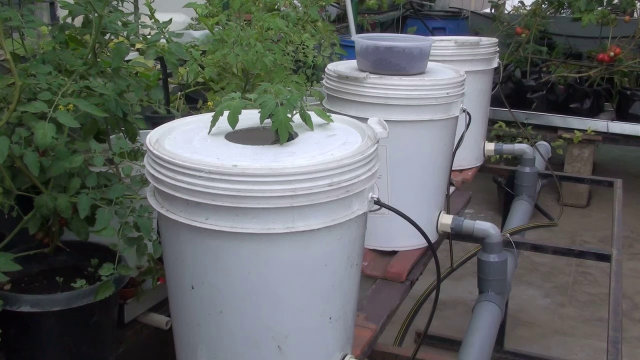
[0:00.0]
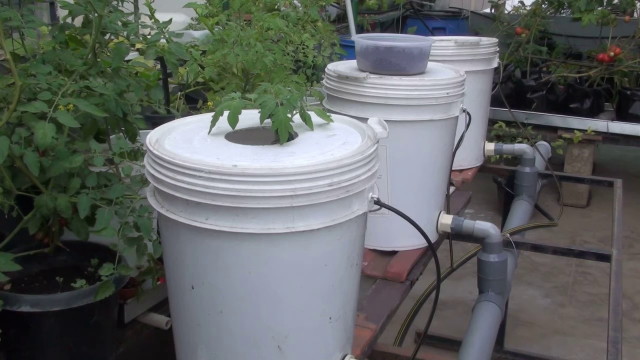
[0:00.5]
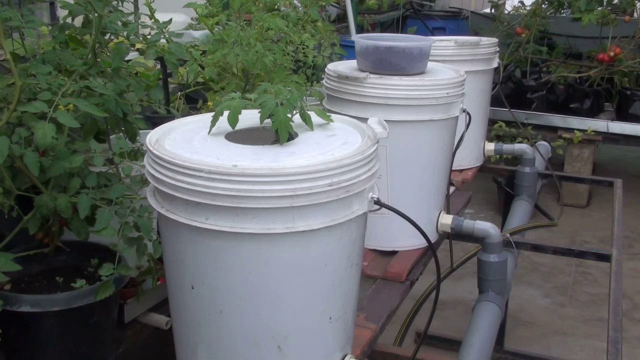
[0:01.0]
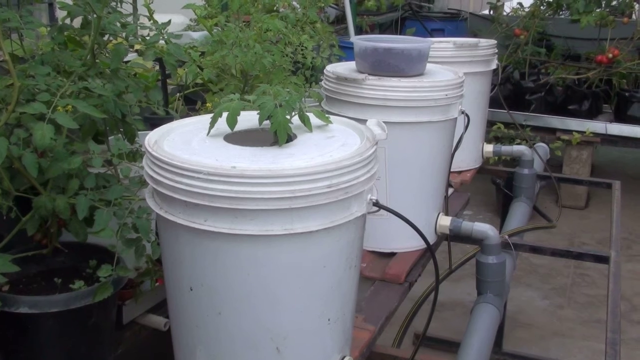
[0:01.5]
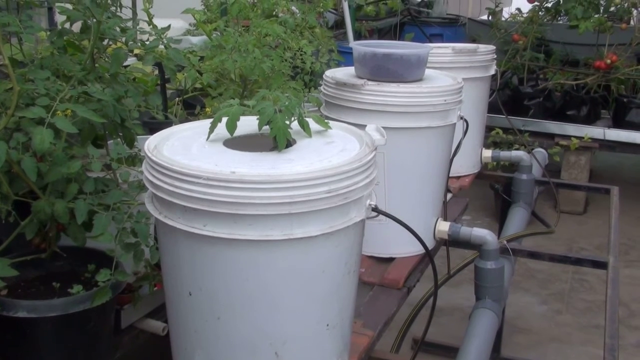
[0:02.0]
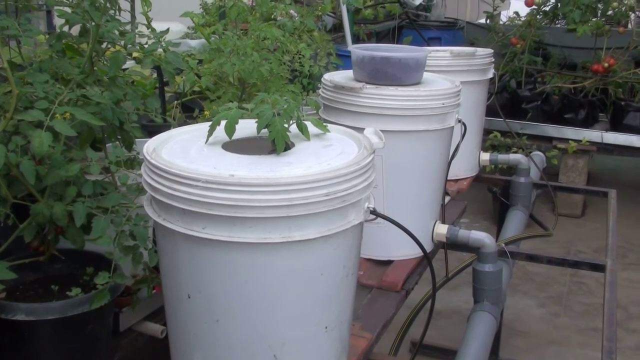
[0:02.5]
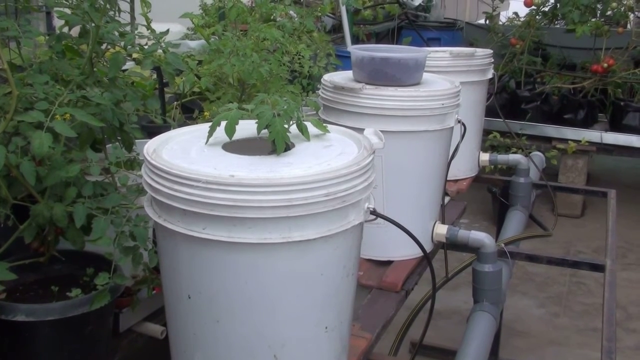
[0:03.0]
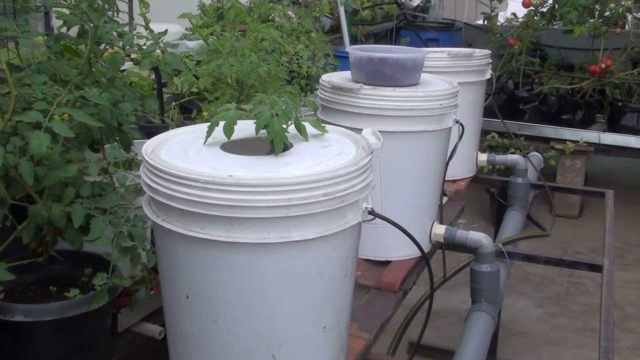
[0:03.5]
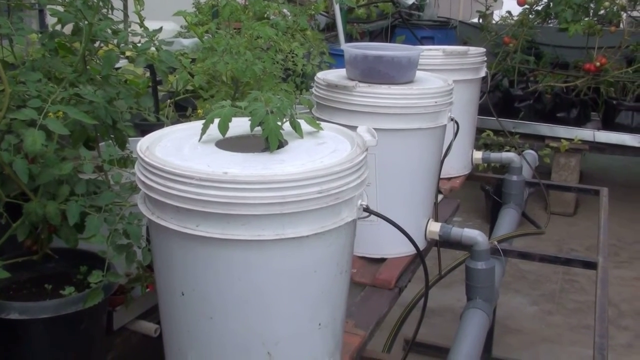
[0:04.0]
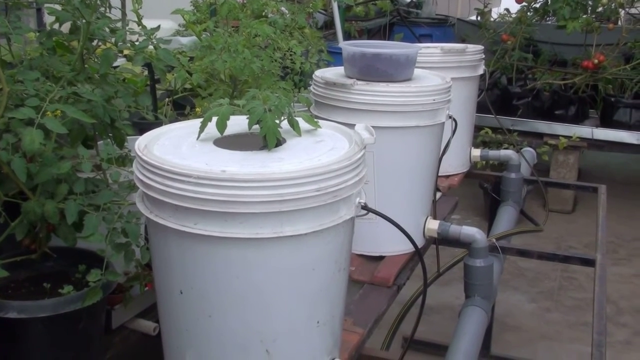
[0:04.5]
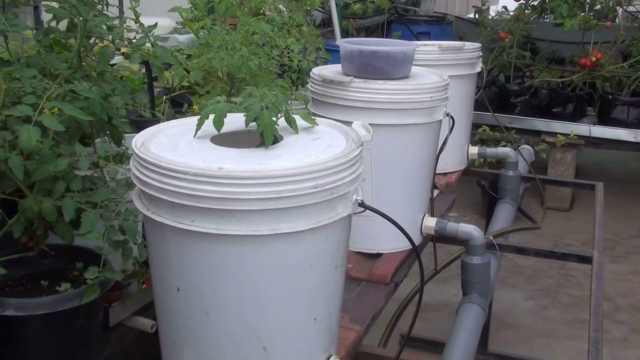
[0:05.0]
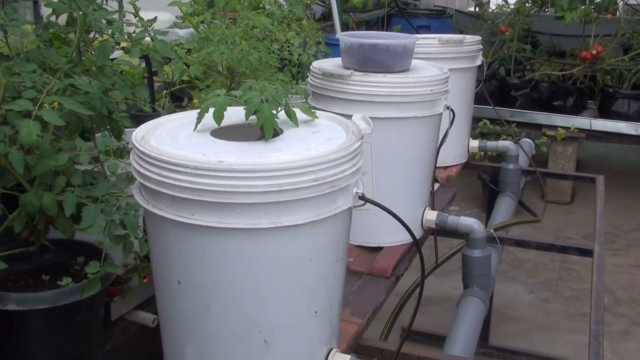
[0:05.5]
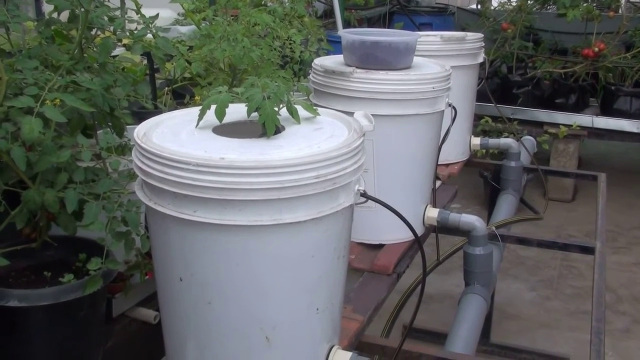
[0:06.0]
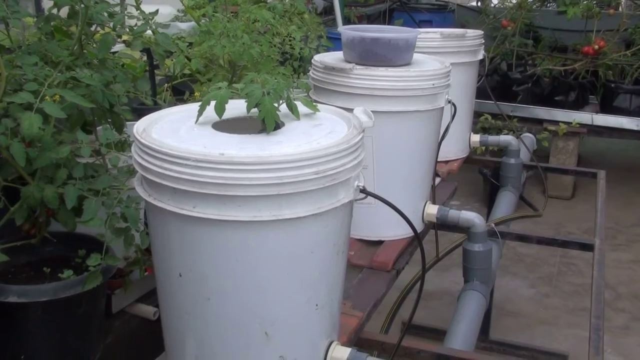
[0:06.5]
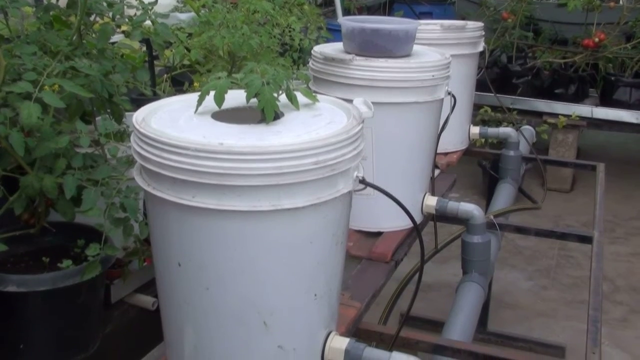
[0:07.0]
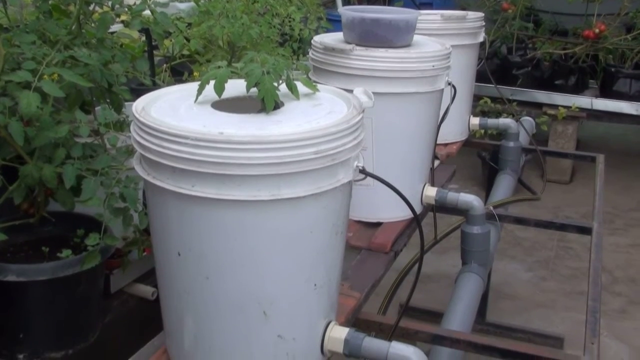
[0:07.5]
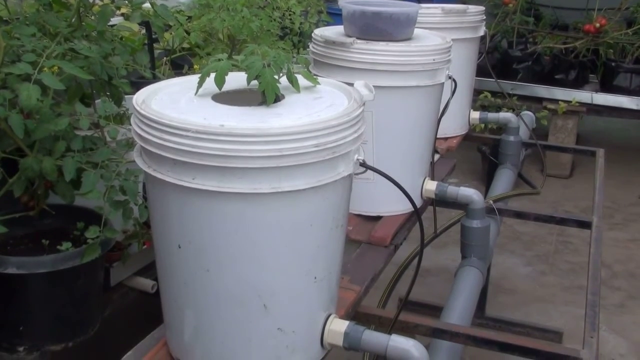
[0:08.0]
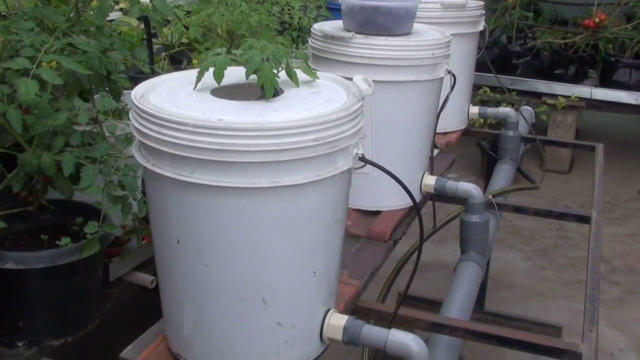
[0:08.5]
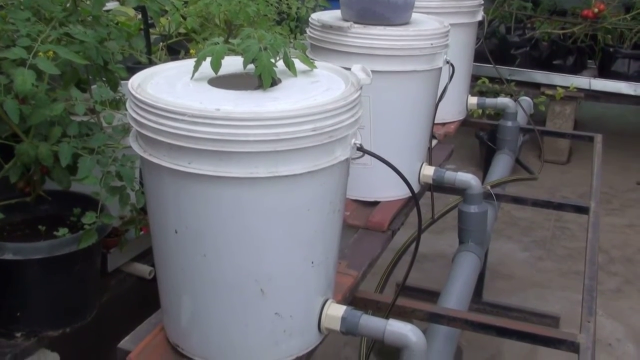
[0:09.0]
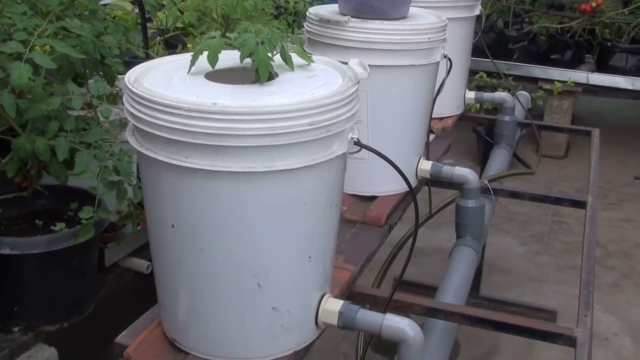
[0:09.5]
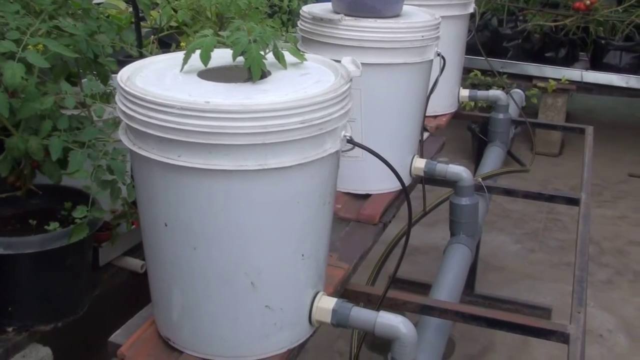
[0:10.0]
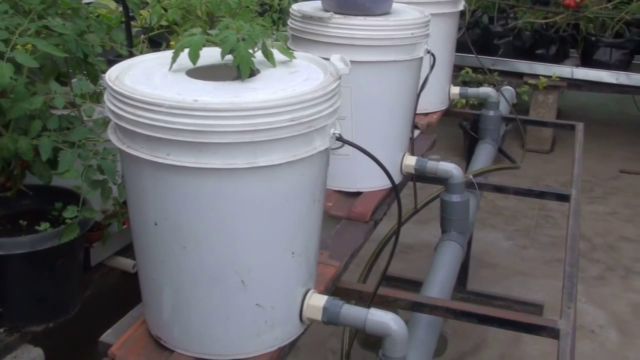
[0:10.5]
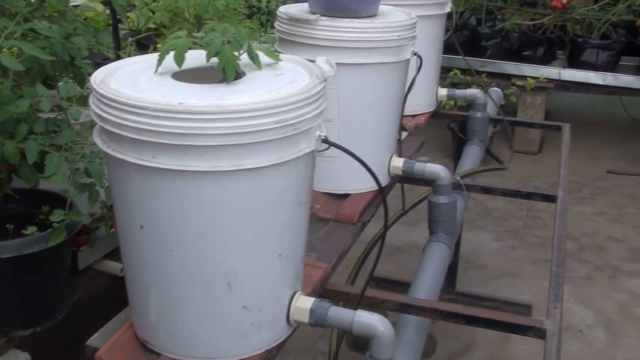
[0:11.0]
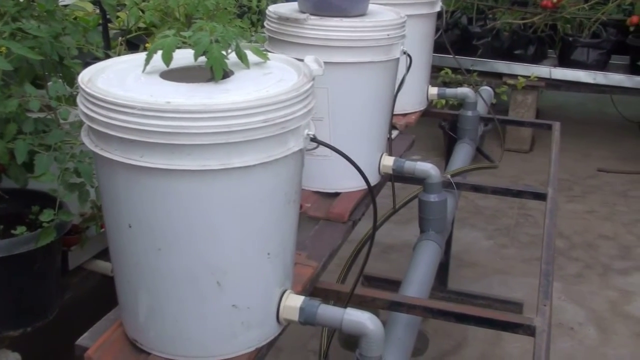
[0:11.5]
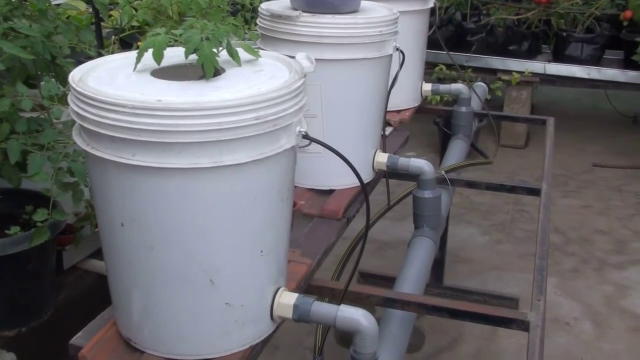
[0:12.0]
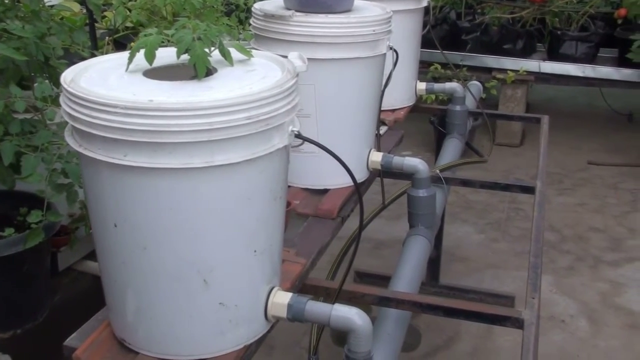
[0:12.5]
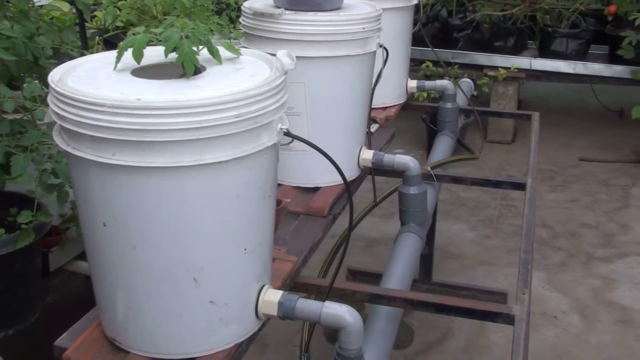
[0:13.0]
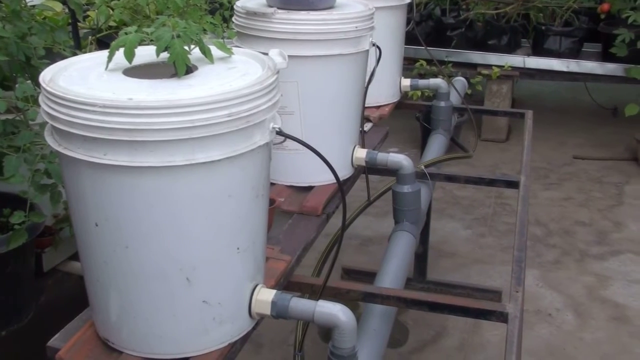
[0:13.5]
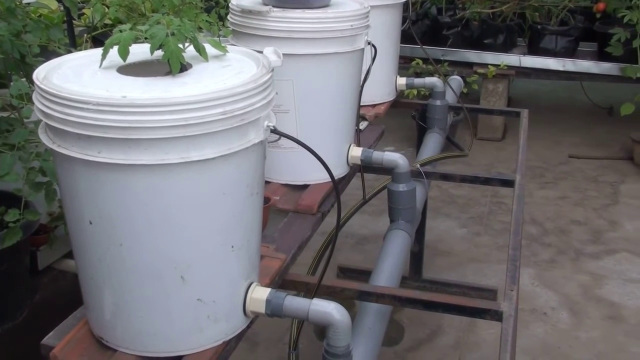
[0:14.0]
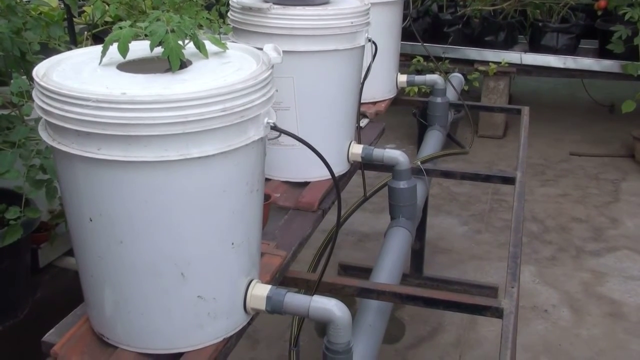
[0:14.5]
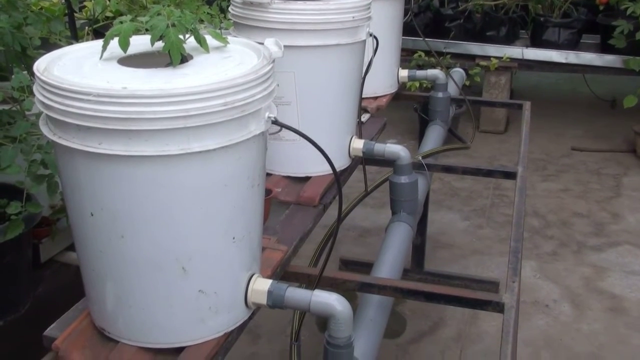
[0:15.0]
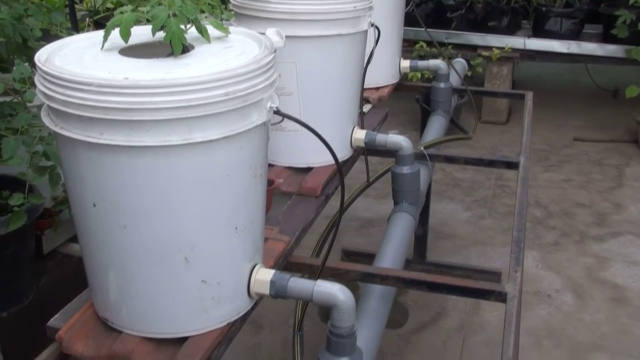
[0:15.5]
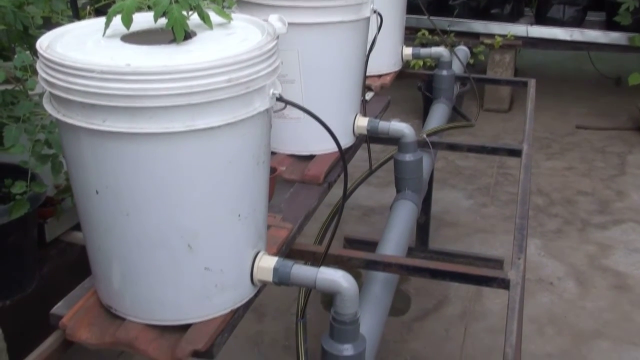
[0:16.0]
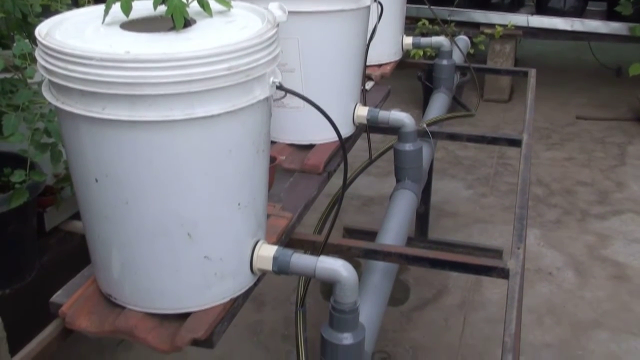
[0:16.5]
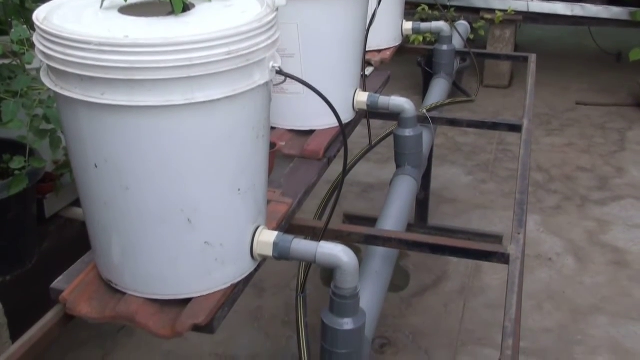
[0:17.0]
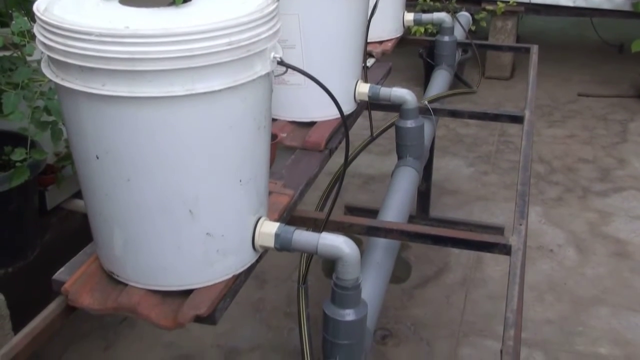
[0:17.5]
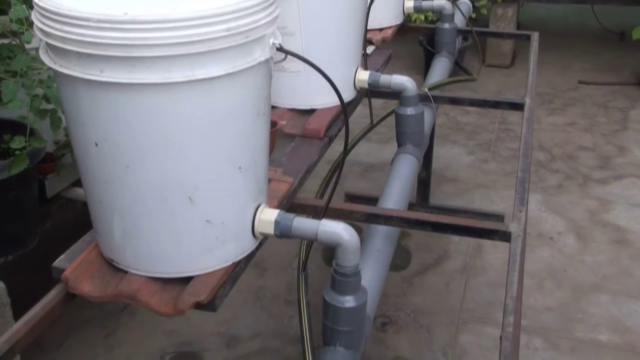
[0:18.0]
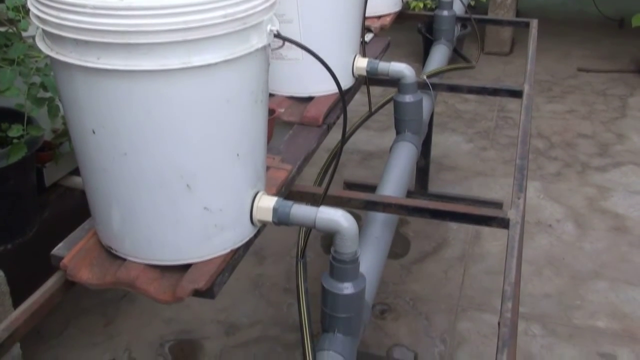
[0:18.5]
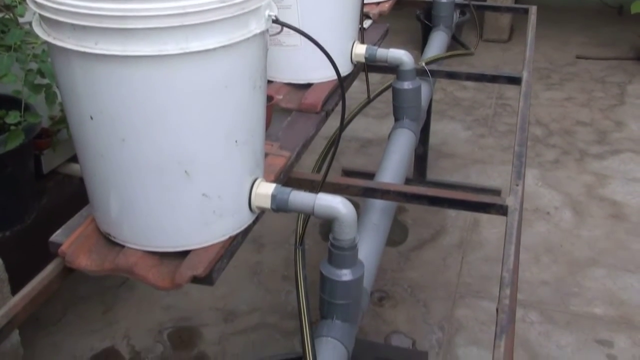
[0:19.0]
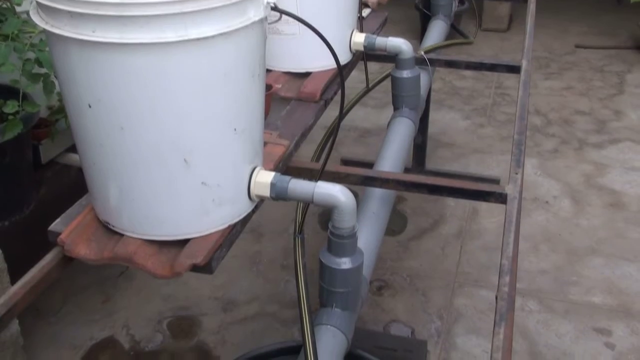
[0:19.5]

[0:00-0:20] Three white buckets, or bucket systems, probably for irrigation, are set up in what looks like a garden, orchard or farm setting with plants around. The camera pans slowly around, showing everything. Gray pipes are connected to the buckets, and there is a hole on top of each bucket; everything is carefully aligned so that it looks like a system, possibly an irrigation system. In the background, which looks like an orchard or garden of sorts, there are small trees with small leaves. The pipes are reinforced with steel, and something made of steel reinforces the stand the buckets are standing on. The camera slowly turns, showing everything at the front. There is also a bucket of soil on the other side, which seems to be where the plants are put. There is solid ground on one side; the other side cannot really be seen.